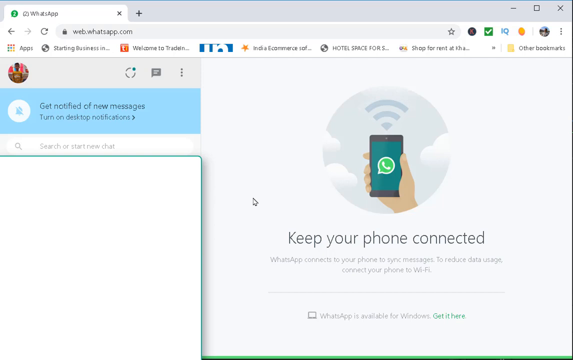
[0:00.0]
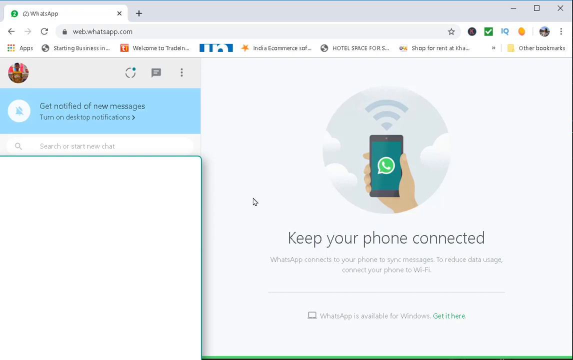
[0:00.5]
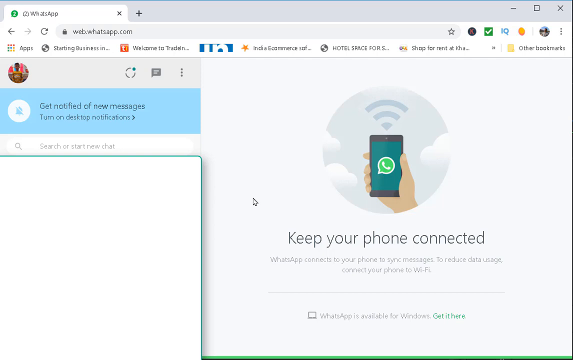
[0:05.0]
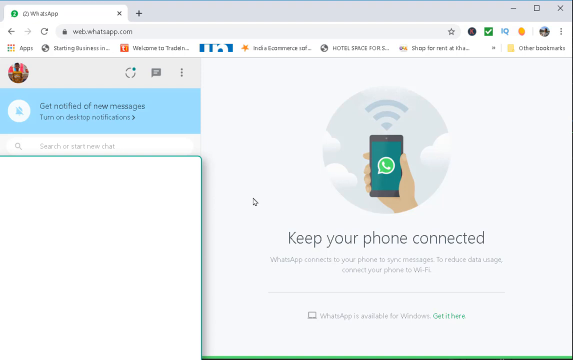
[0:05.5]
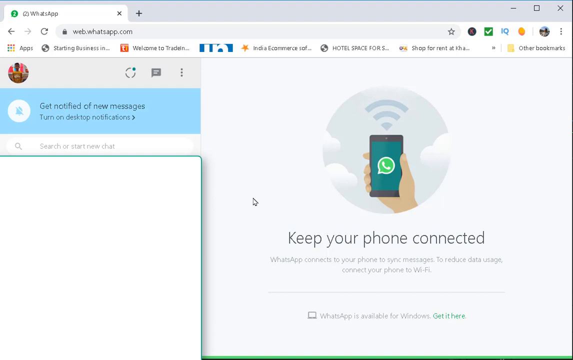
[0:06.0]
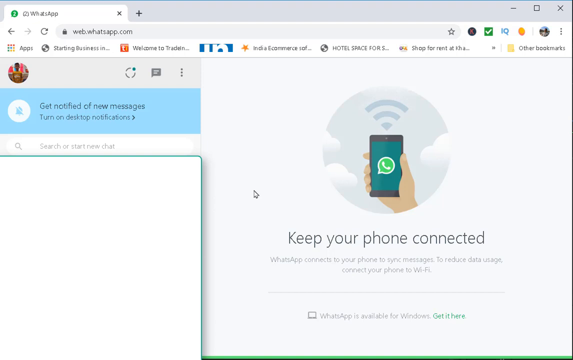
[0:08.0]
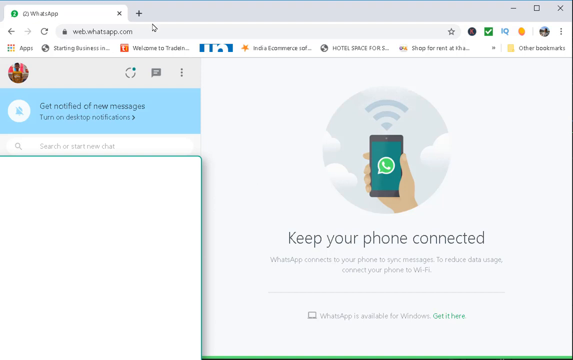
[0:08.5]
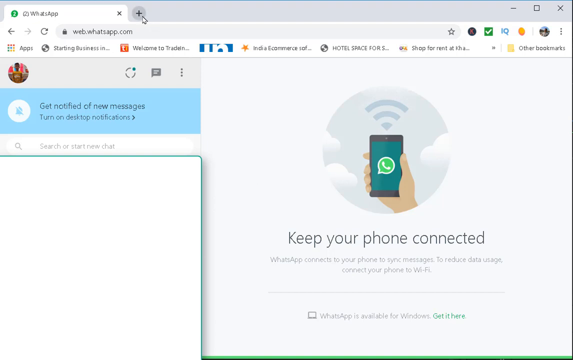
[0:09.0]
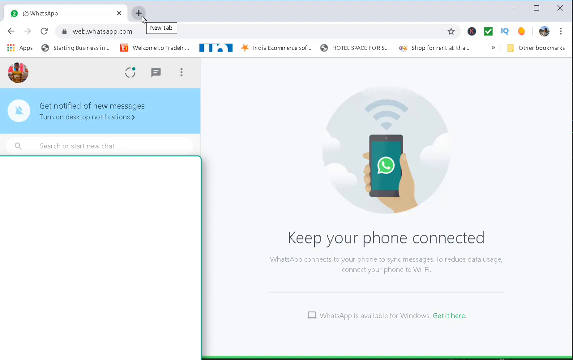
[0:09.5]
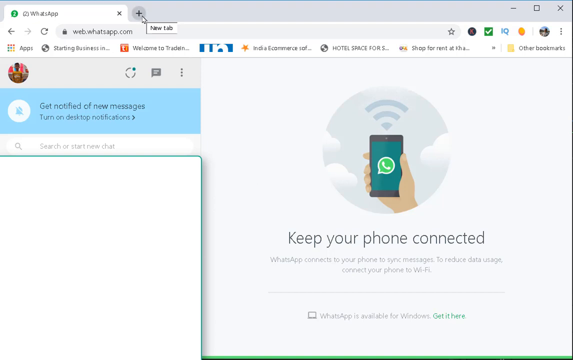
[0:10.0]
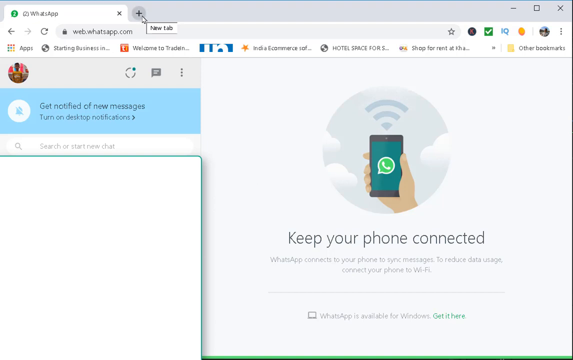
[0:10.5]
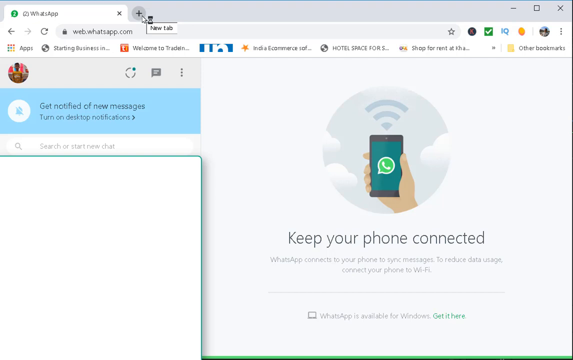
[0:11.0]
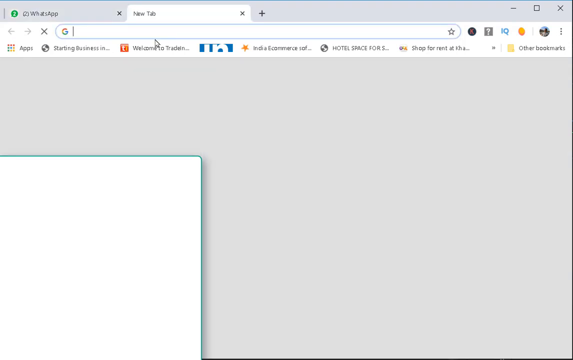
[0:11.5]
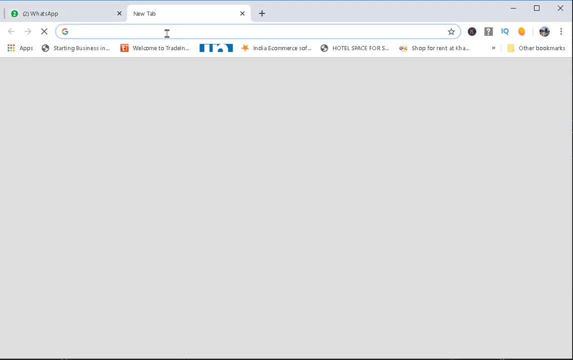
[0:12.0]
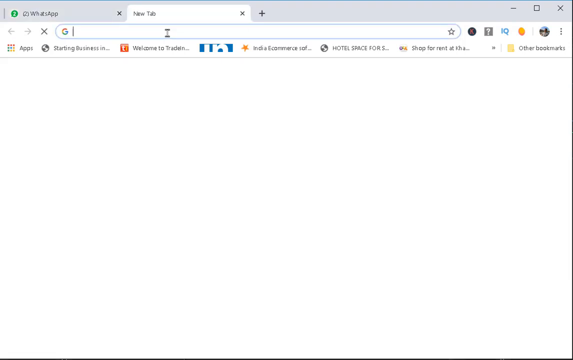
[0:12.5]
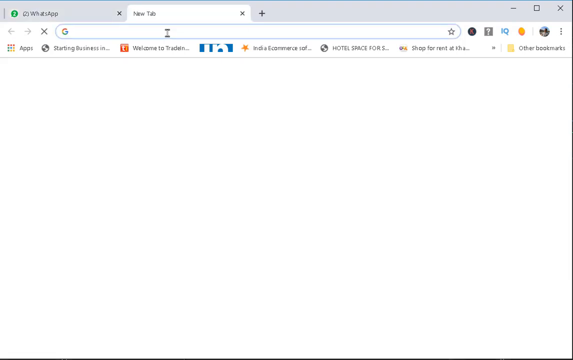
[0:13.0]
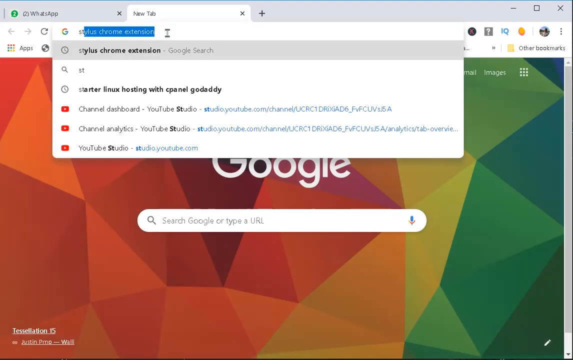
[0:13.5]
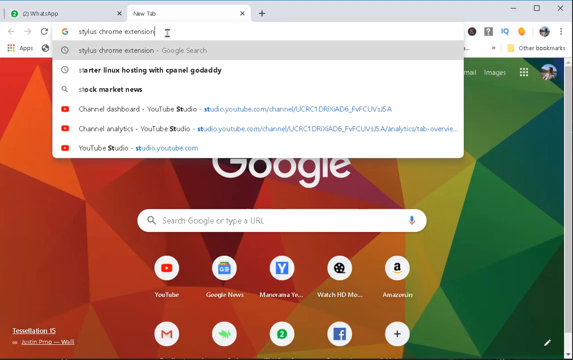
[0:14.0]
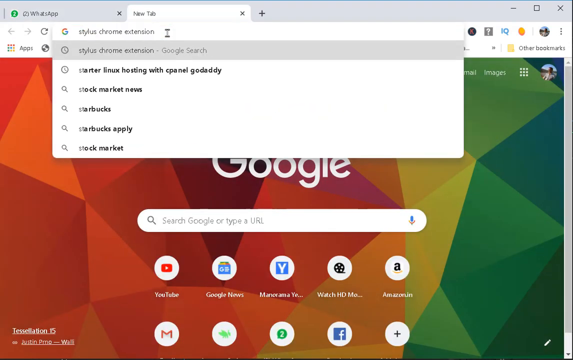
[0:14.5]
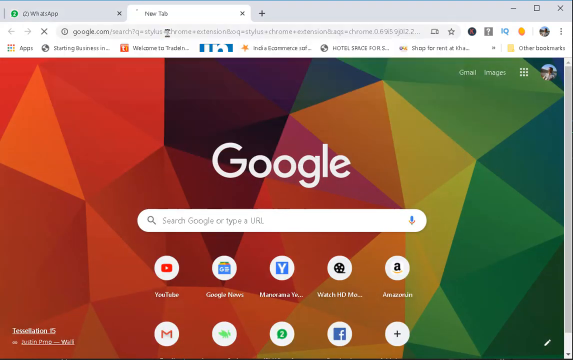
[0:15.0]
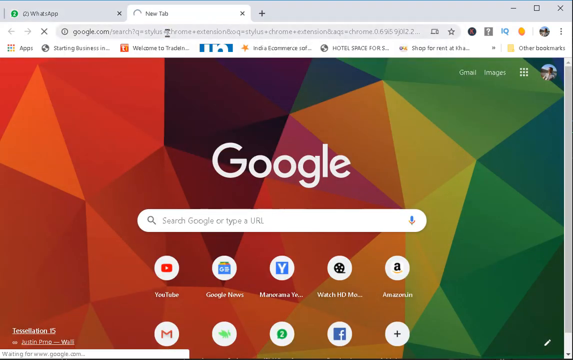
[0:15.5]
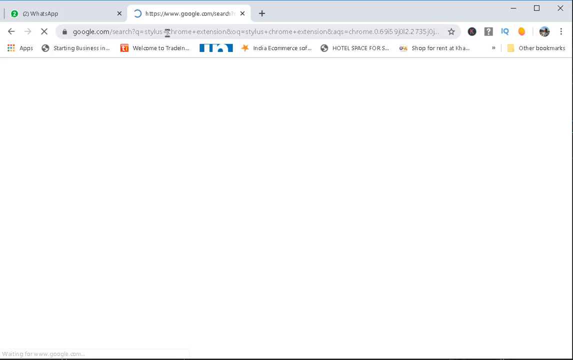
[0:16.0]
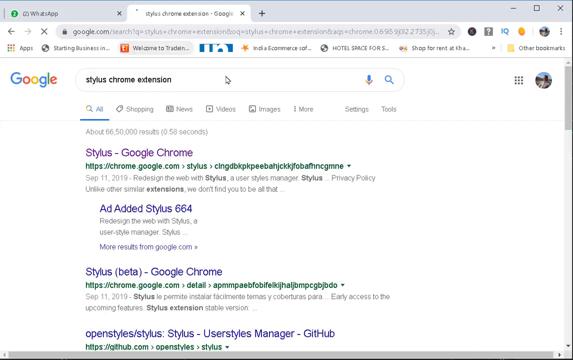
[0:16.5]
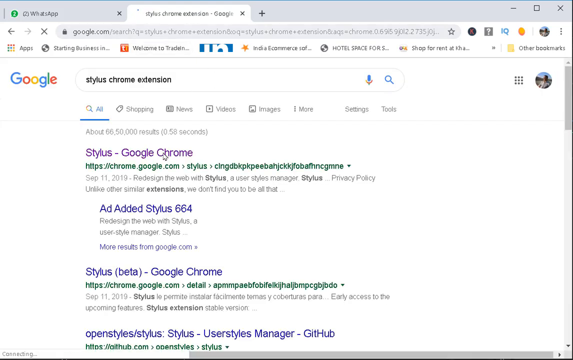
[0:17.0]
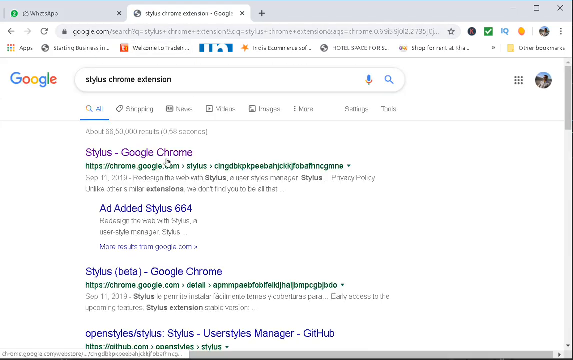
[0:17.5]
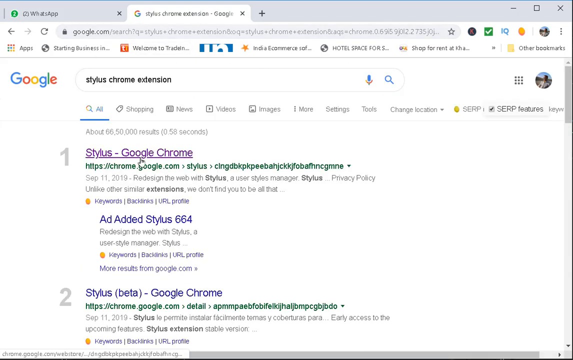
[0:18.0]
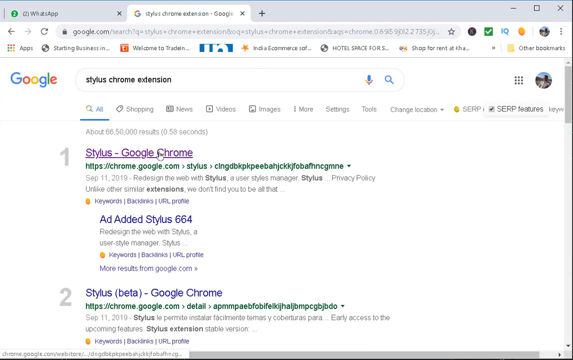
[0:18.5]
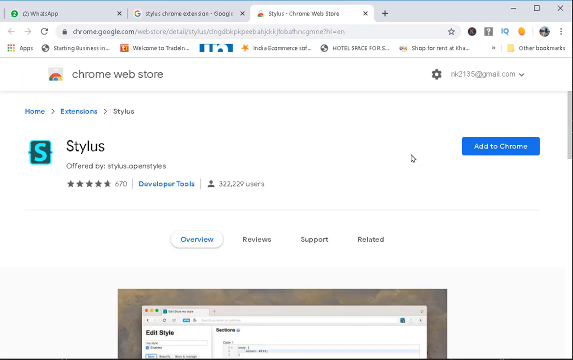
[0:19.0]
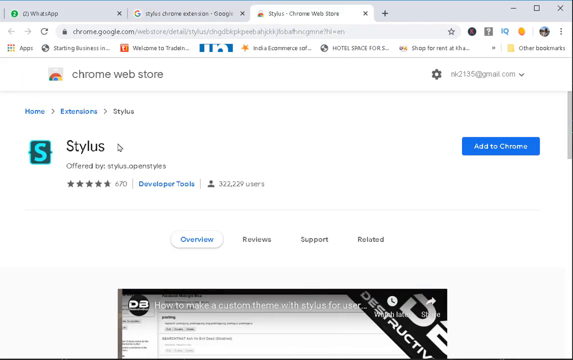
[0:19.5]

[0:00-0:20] A PC screen, from a desktop or a laptop, shows Chrome with WhatsApp open in a tab and the text "keep your phone connected." A new tab is added next to the WhatsApp tab and "stylus chrome extension" is typed in. The Stylus extension, a blue and light blue app, is opened. A profile is visible, along with an arrow that looks like a Wi-Fi symbol, and the Google home screen shows YouTube. The Stylus page in Chrome reads "edit stylus 664" and "Redesign the web with stylus," mentions the stylus manager, and appears to show the date September 11, 2019.